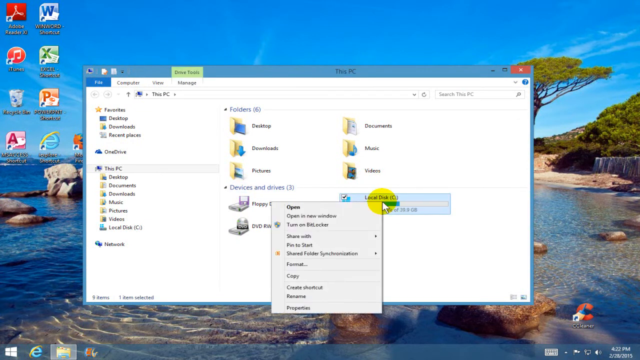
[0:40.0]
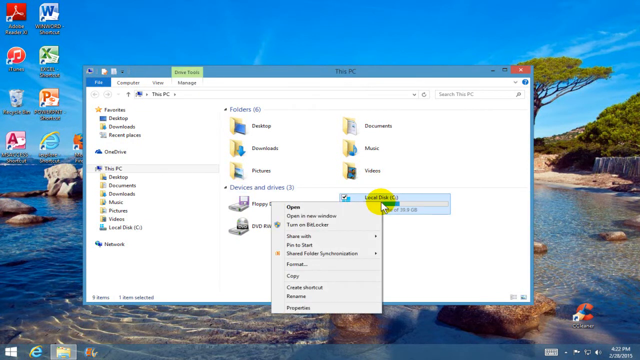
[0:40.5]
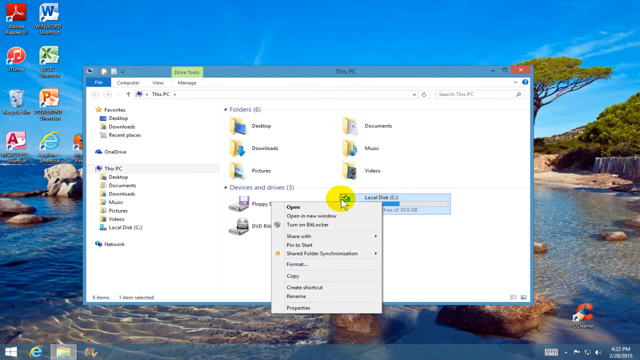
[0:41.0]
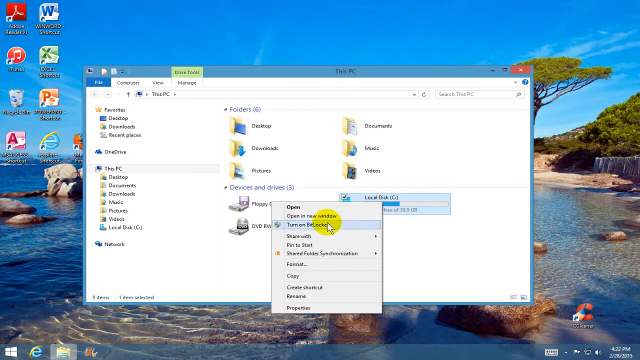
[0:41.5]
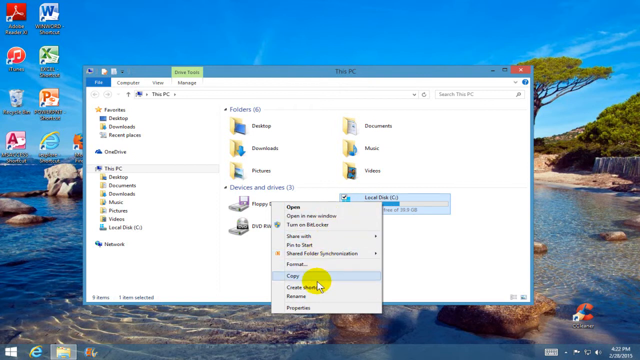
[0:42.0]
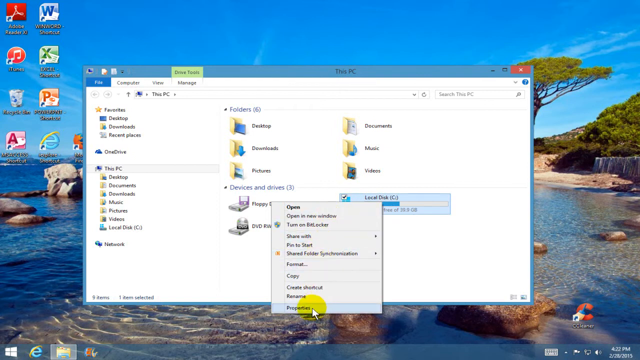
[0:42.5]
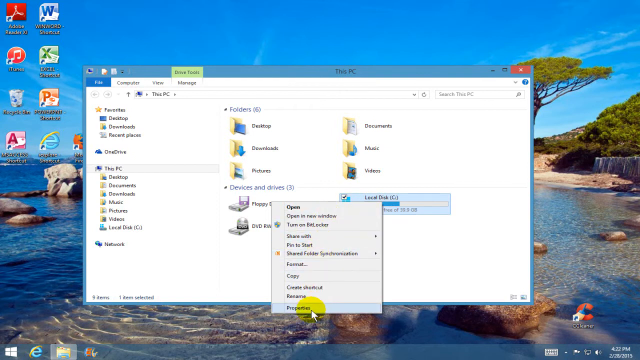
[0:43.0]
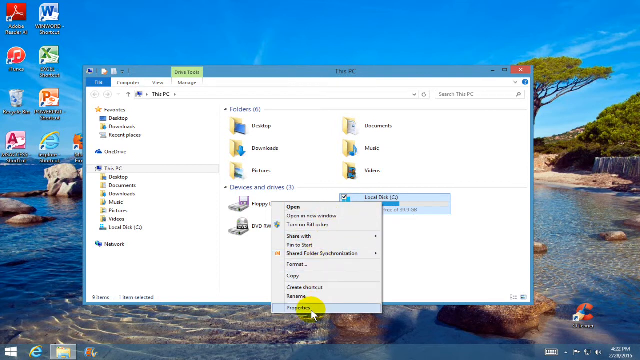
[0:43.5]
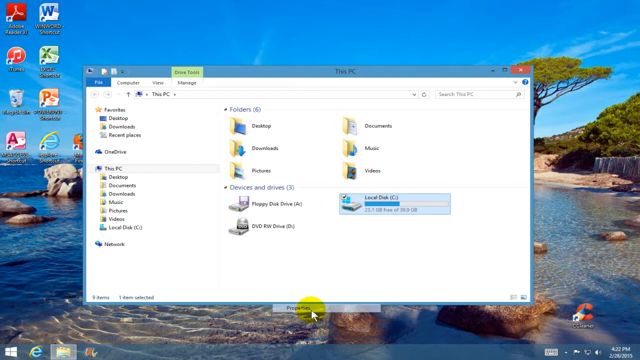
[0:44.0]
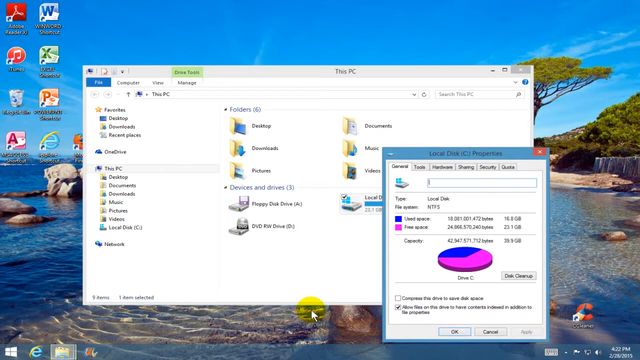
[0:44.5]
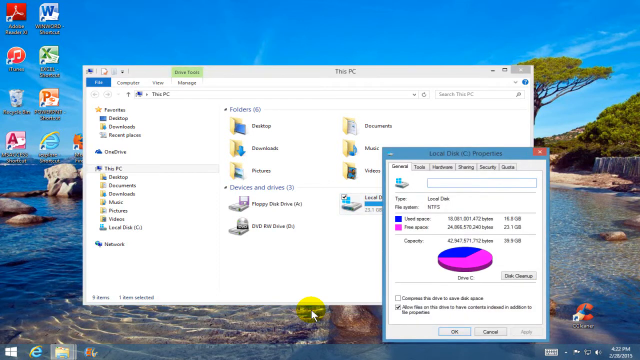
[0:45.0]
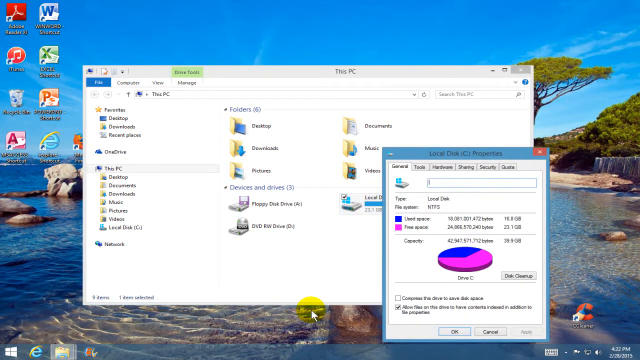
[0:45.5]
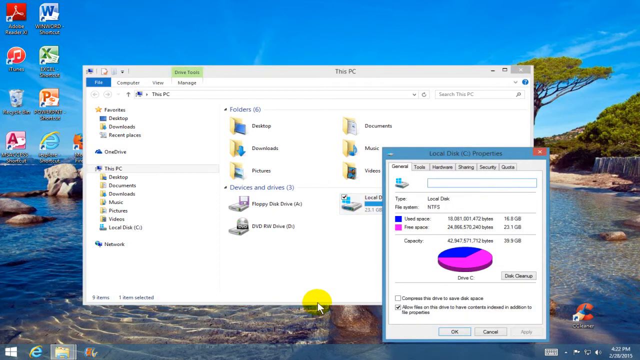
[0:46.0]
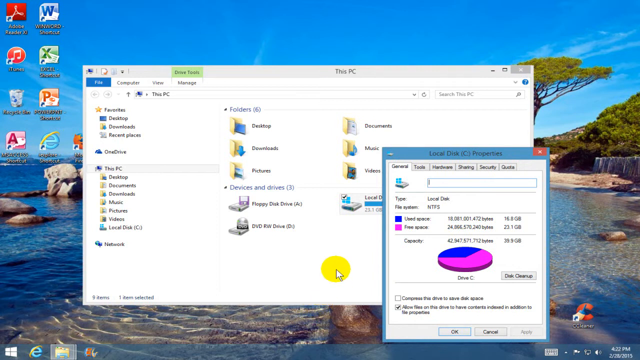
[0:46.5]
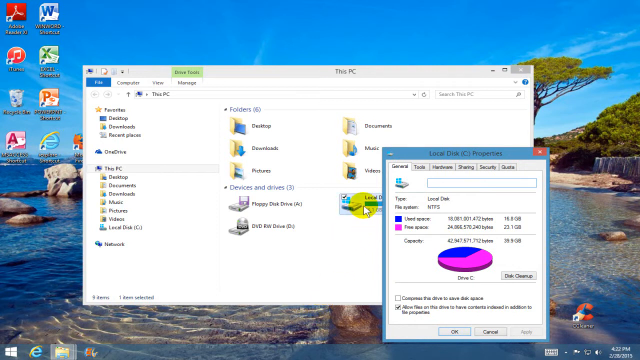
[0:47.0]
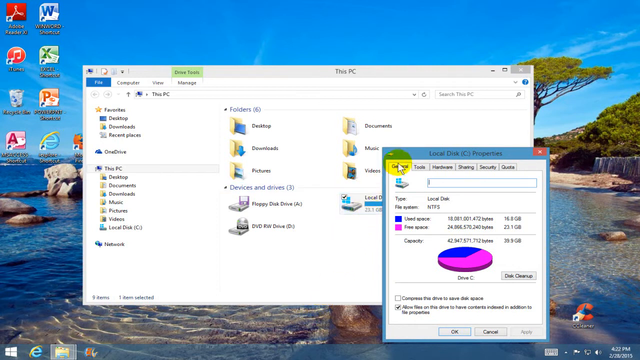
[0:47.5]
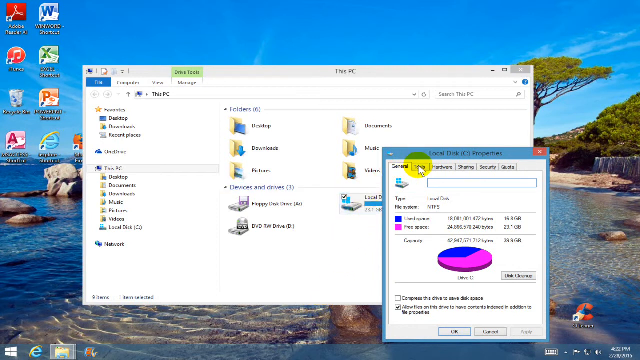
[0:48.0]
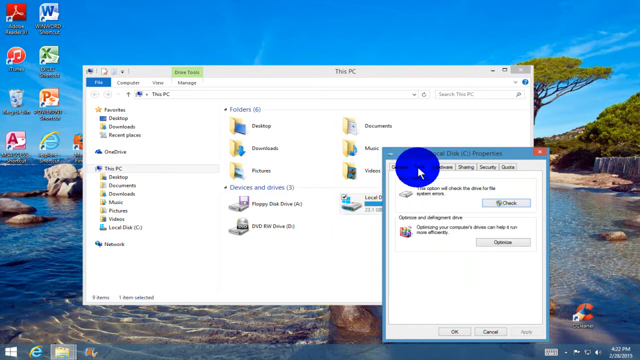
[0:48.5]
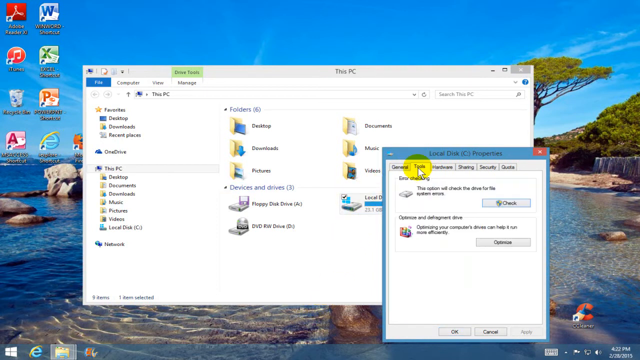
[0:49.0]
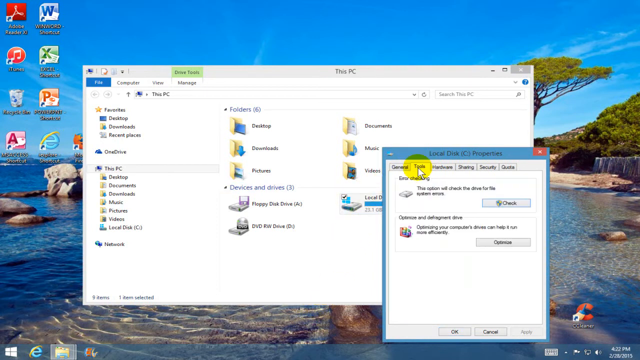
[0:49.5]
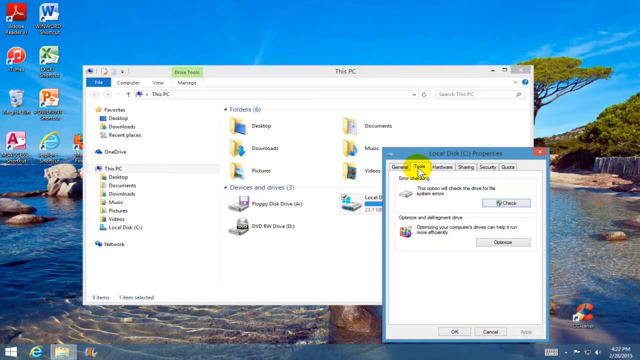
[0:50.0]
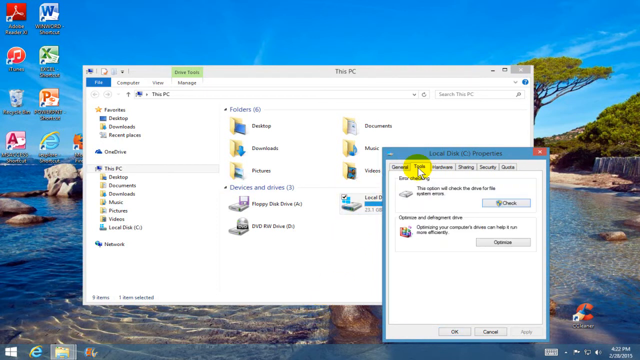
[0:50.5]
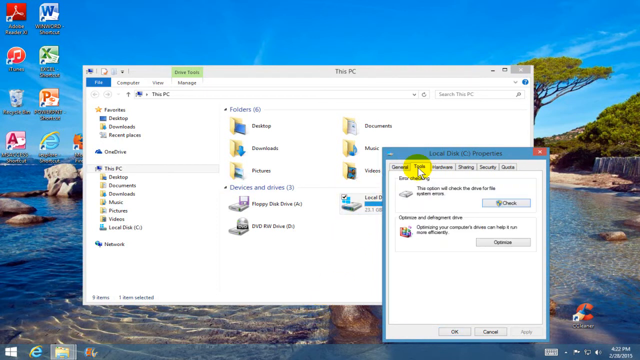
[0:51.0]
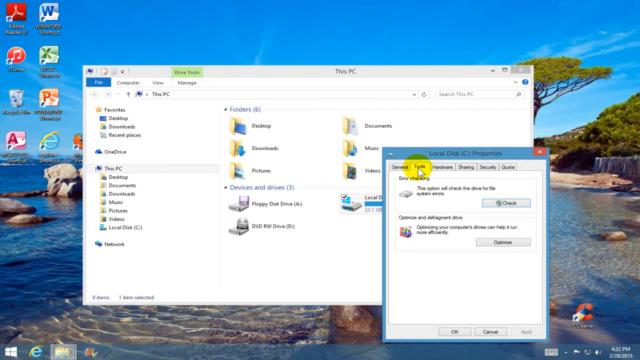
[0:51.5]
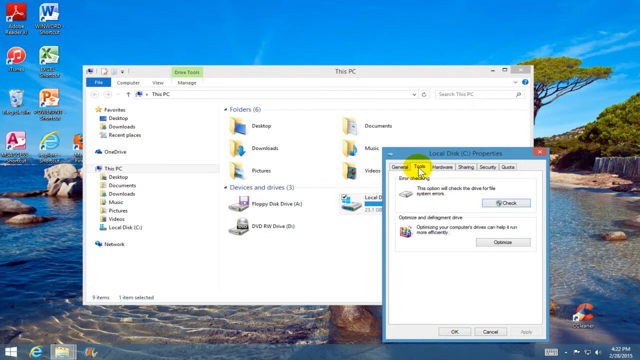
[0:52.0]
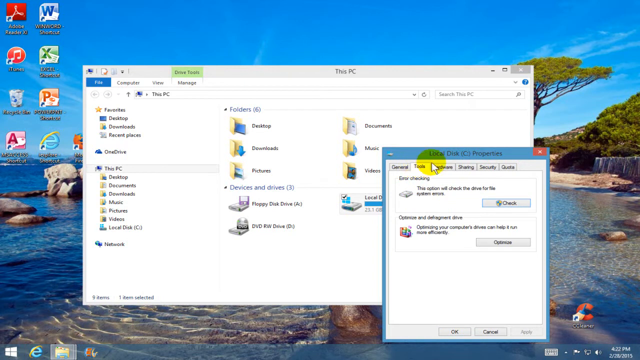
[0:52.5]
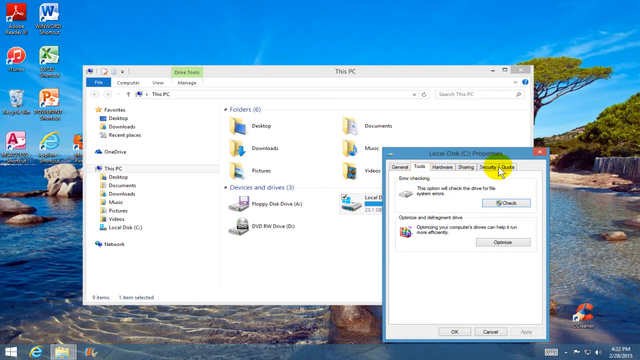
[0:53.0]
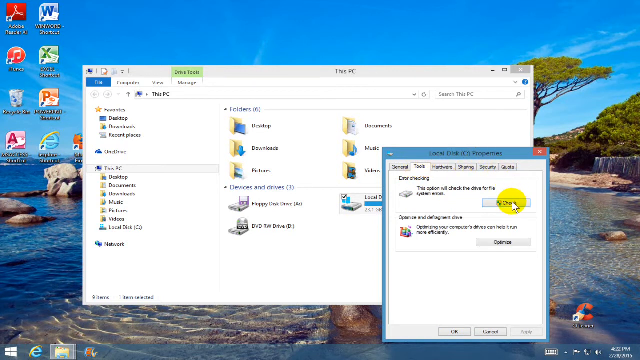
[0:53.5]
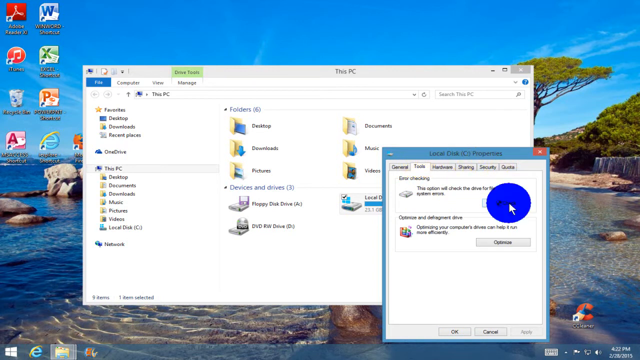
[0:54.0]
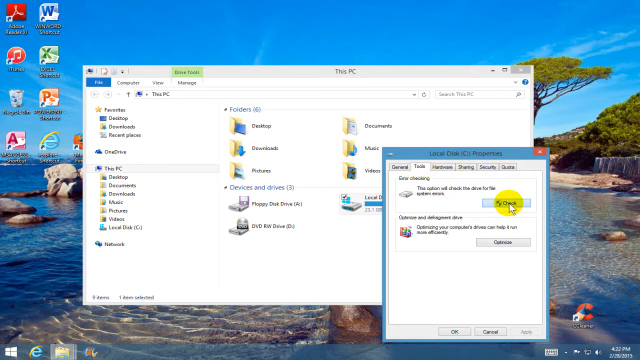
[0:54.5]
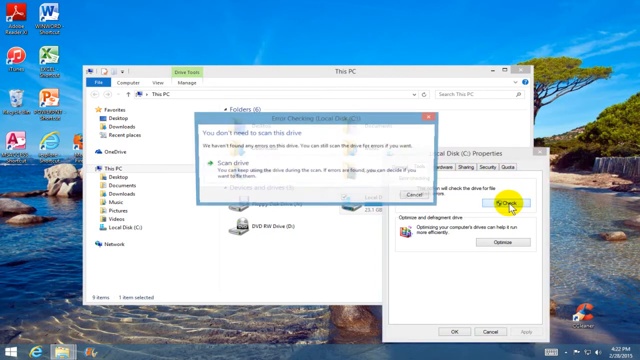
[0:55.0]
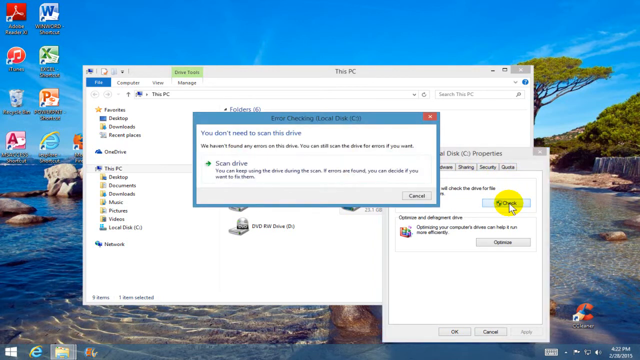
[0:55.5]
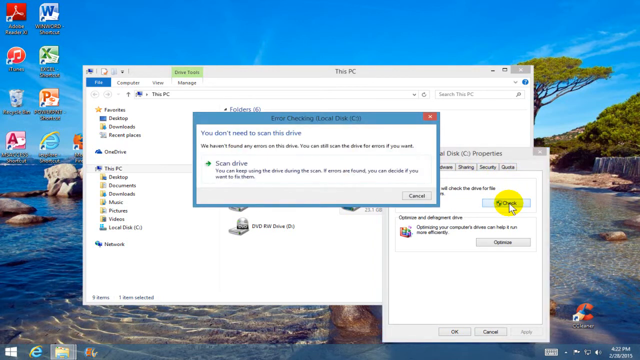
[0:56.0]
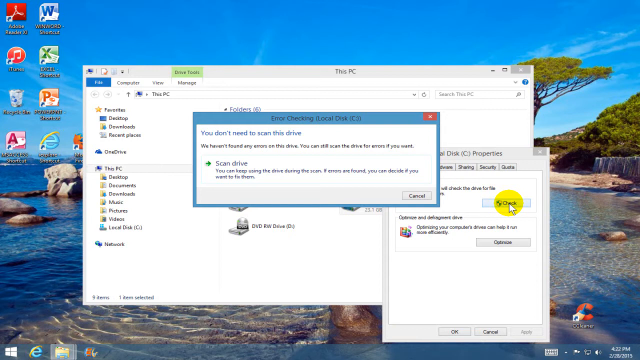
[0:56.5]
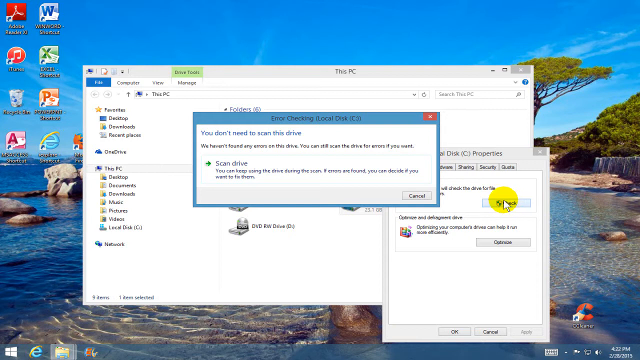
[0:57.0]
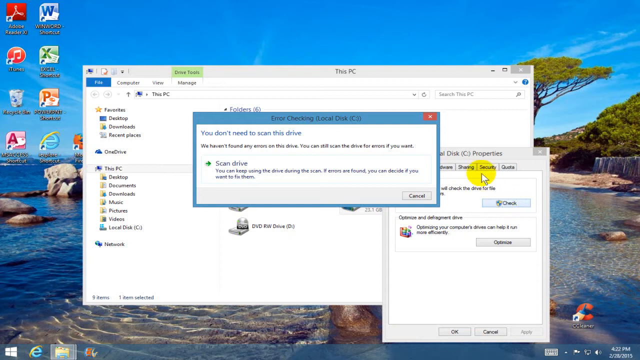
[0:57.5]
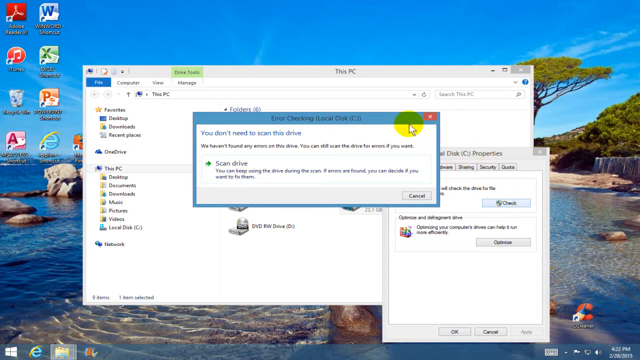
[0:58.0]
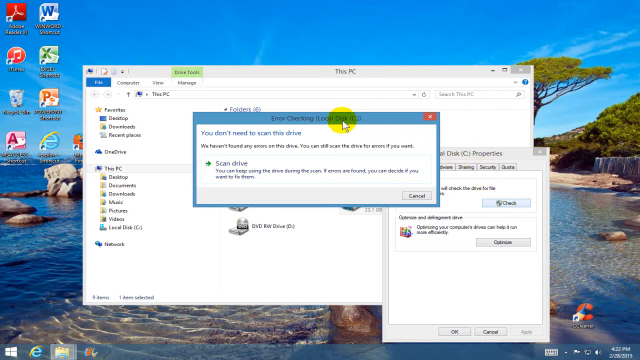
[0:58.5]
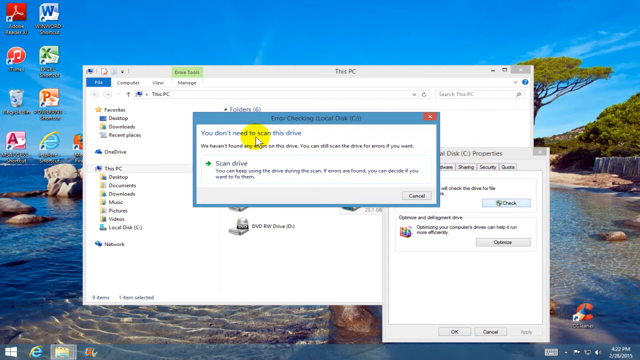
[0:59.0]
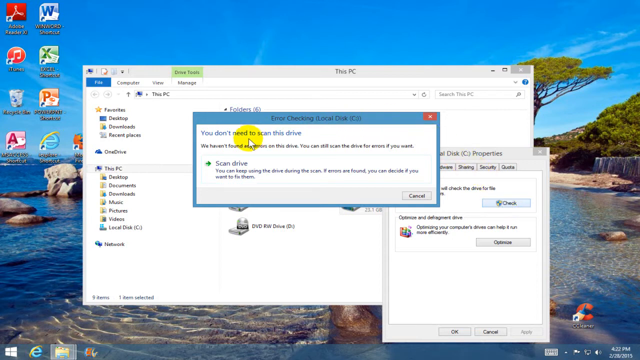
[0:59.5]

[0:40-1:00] On the Windows 8.1 operating system, the This PC app is open and the user right-clicks on Local Drive C, bringing up a menu. The mouse moves down to the bottom of the menu to select Properties, which opens the Properties menu. The user clicks the Tools tab, then clicks Check next to the option for scanning the drive for errors. This brings up a new window, the Error Checking box, with a message at the top that reads "You don't need to scan this drive. We haven't found any errors on the drive. You can still scan the drive for errors if you want." Below it is an option to click Scan Drive.